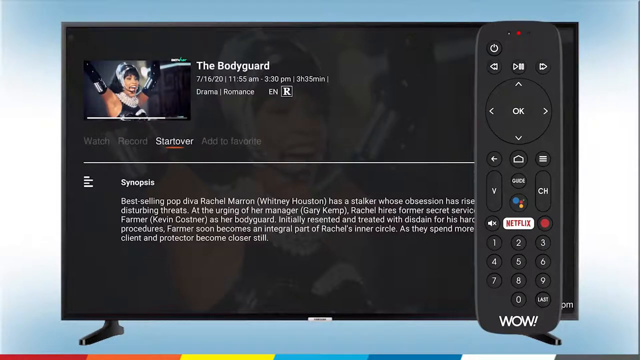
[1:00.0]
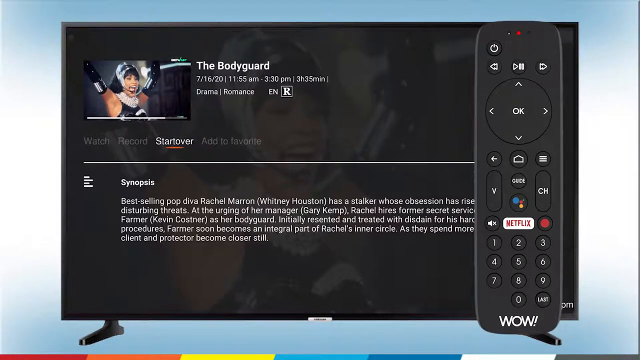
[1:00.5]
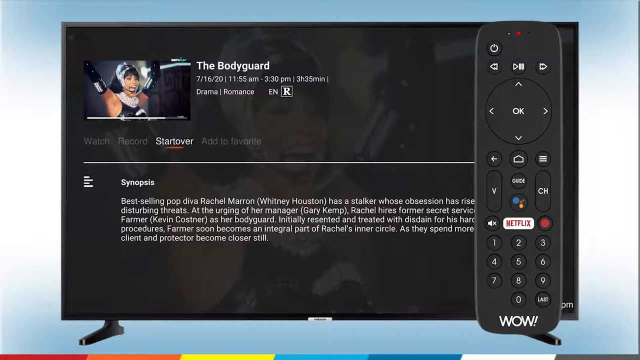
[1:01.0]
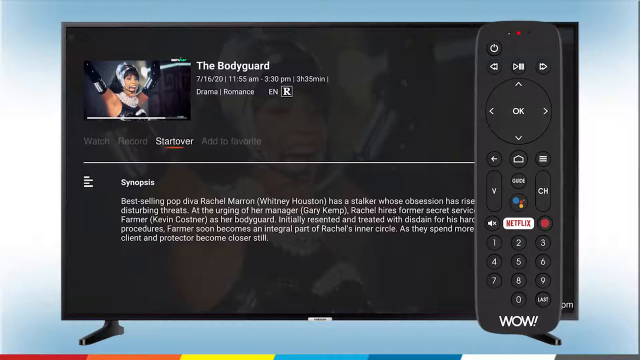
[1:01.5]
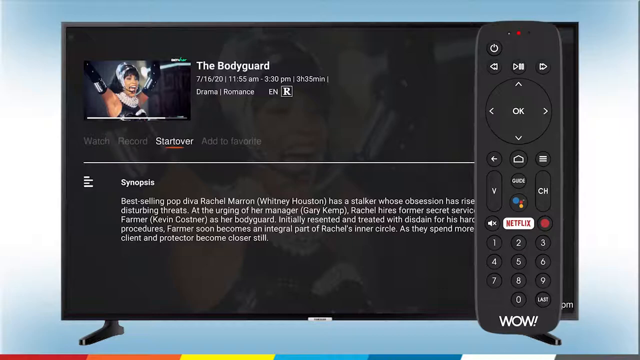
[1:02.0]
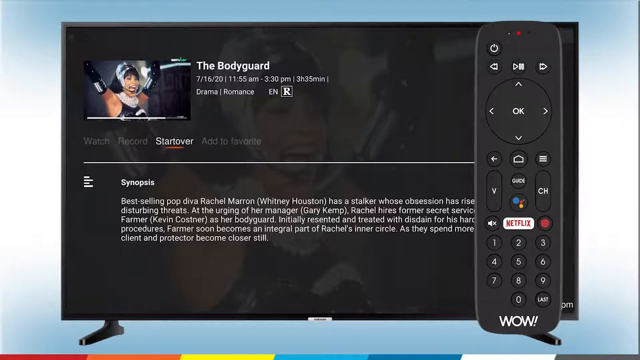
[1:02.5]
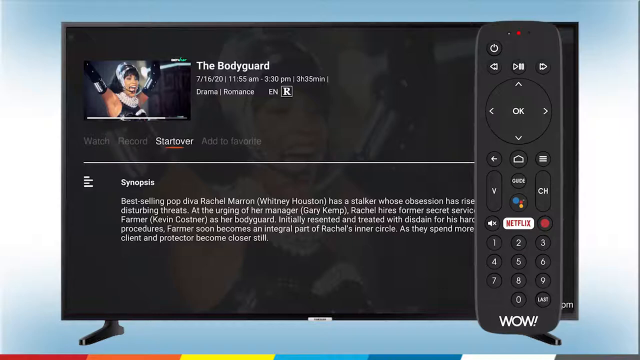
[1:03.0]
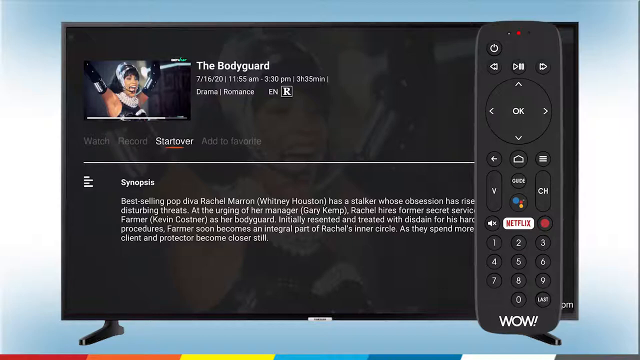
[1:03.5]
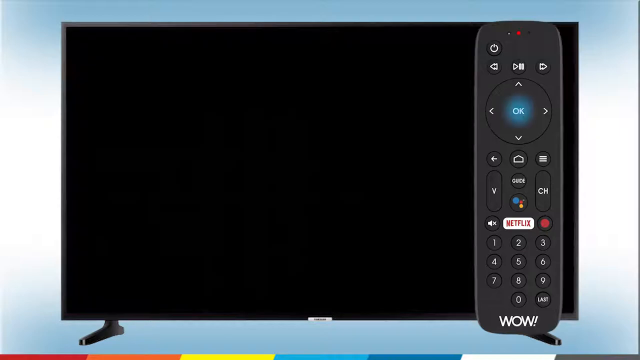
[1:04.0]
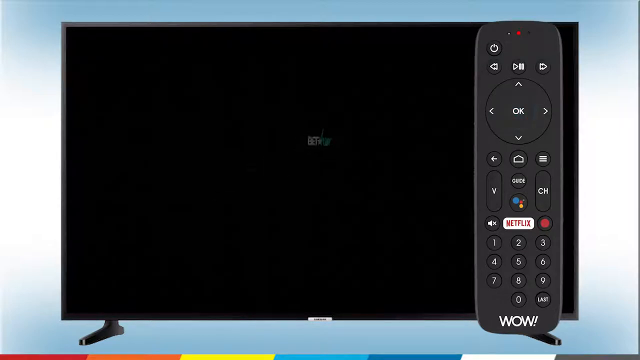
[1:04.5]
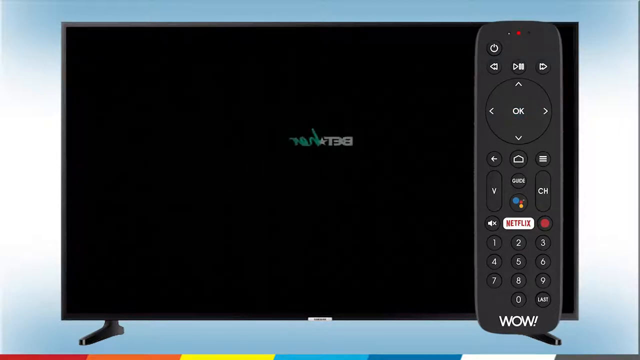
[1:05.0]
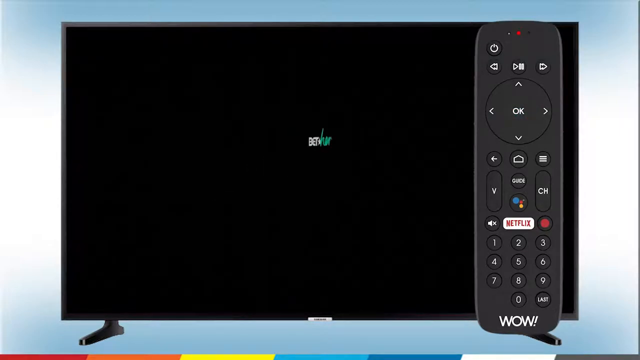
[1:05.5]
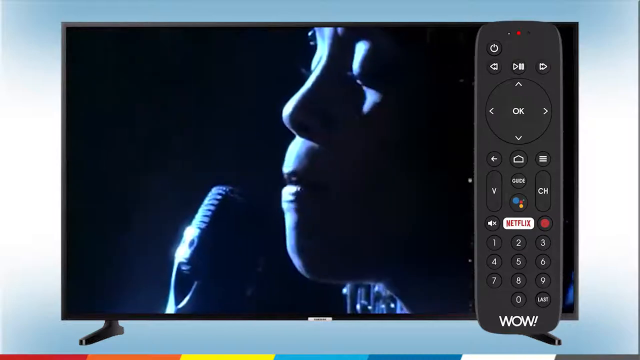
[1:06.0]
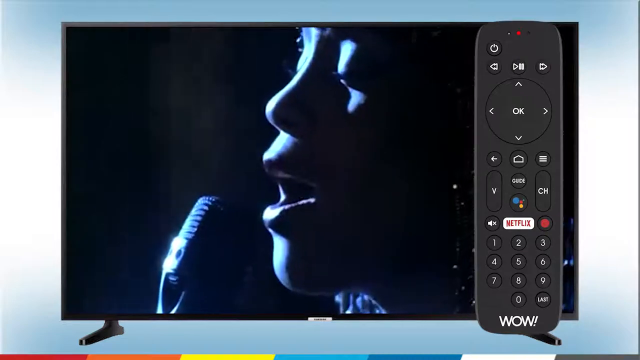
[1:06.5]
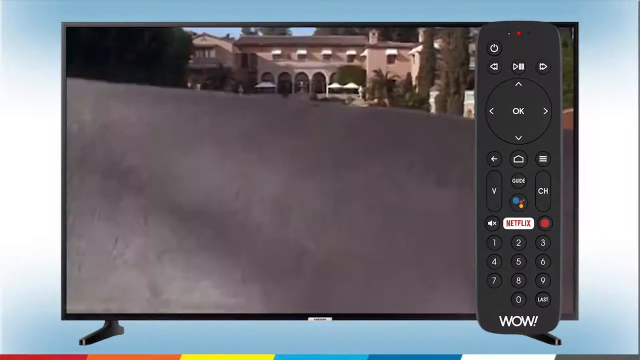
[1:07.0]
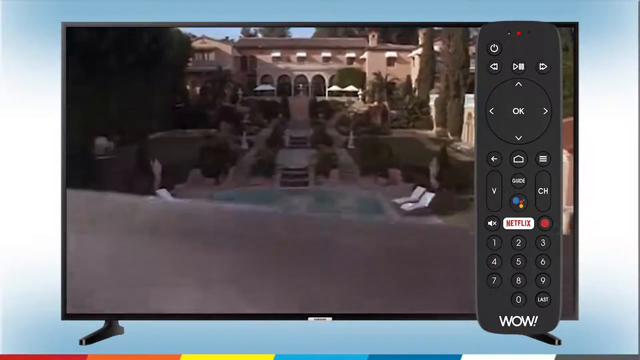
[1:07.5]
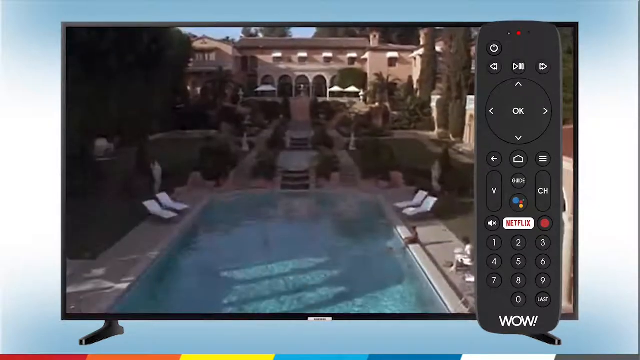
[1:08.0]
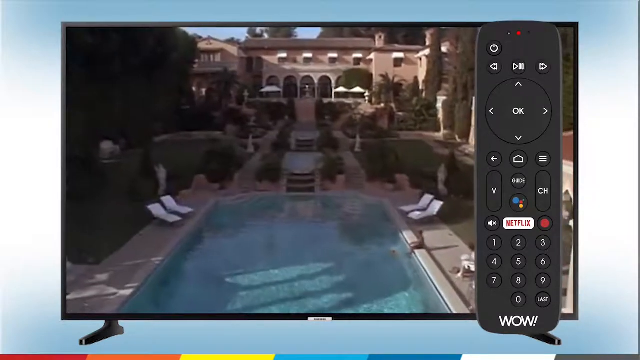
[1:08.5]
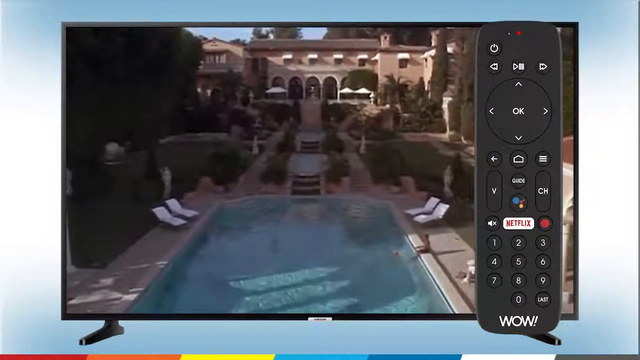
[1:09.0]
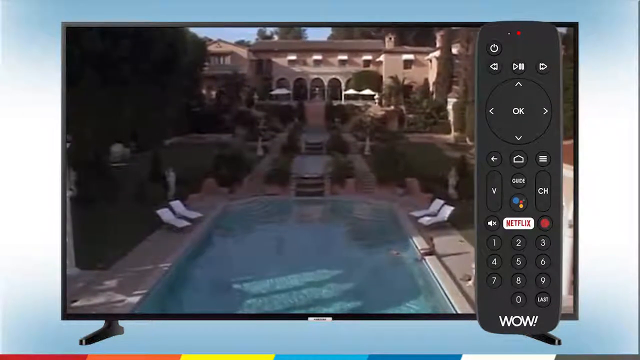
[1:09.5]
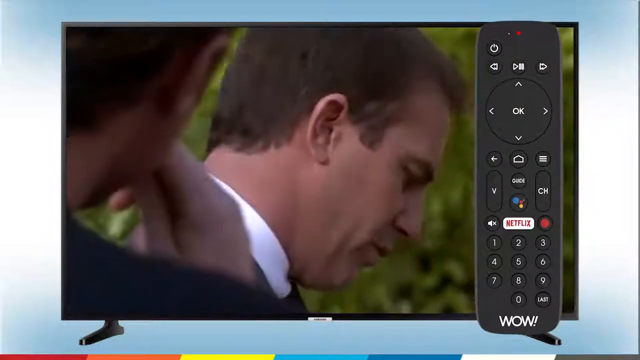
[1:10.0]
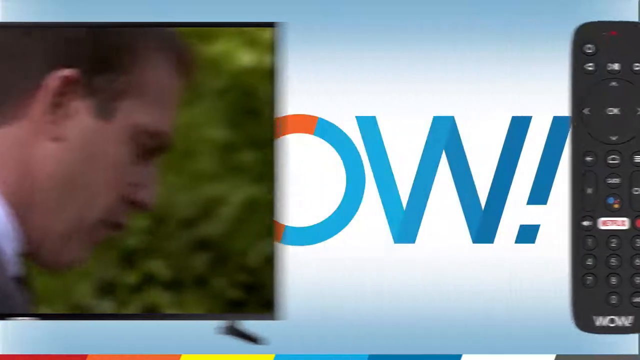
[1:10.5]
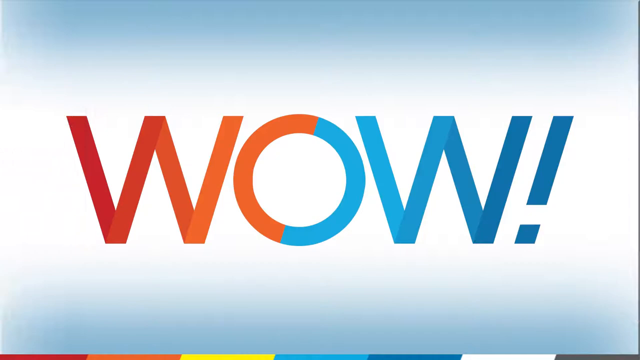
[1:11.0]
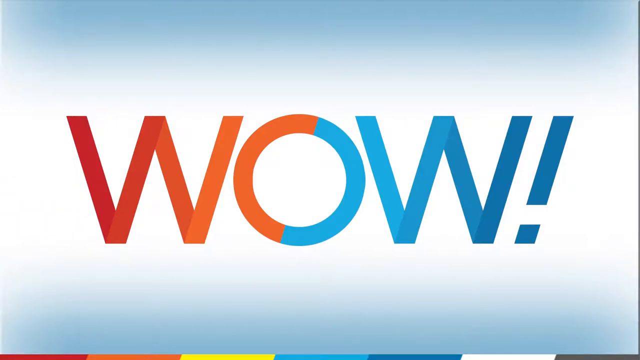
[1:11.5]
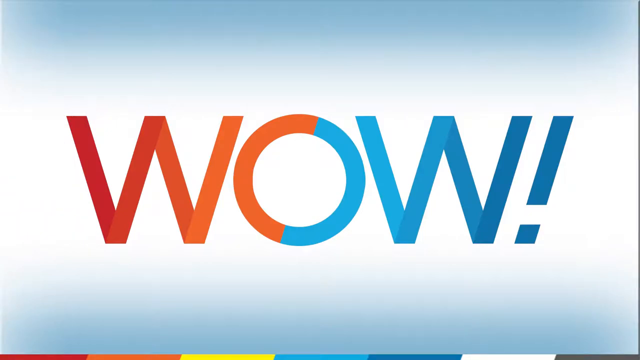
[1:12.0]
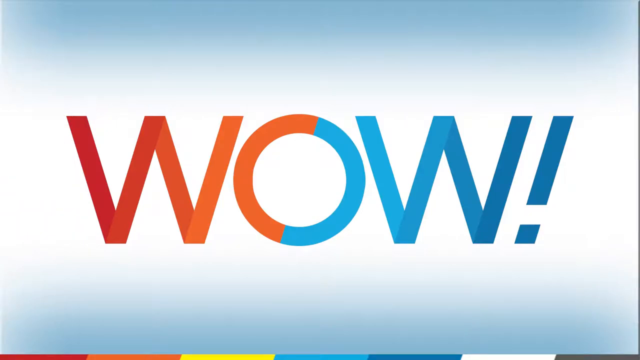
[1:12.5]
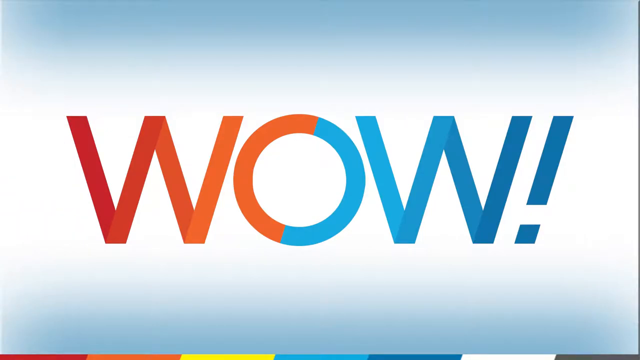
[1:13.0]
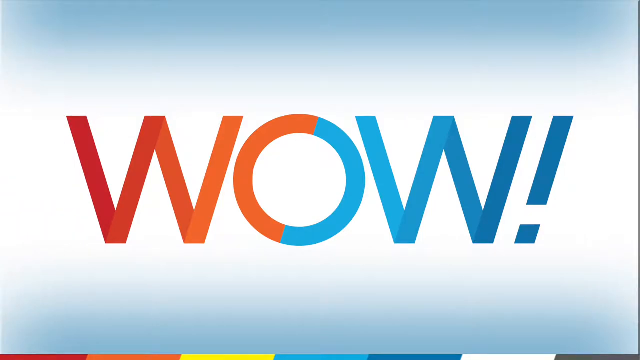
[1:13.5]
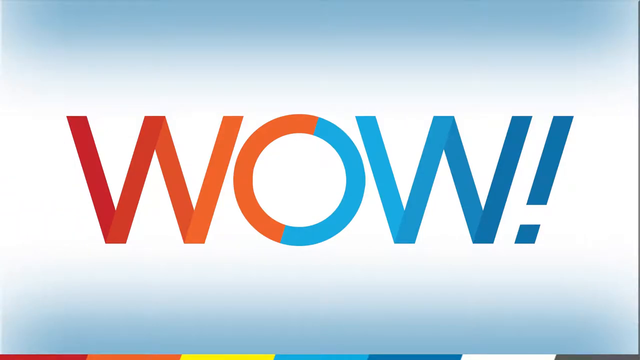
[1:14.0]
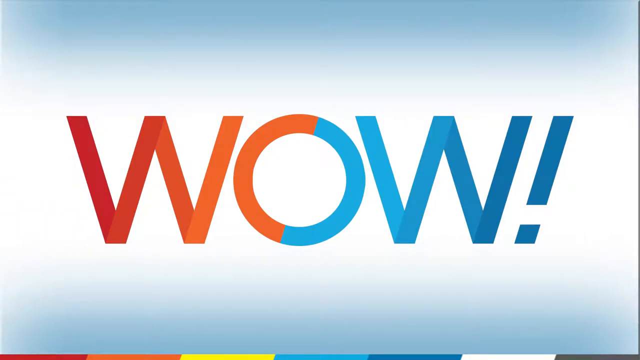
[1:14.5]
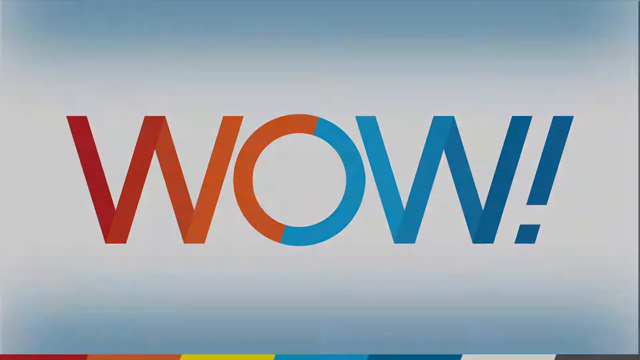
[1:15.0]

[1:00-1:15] The screen still shows the synopsis for the movie The Bodyguard and seems to stay there for a few seconds. On the remote on the right side, the OK button is highlighted and appears to be clicked, as BET Her begins to open. Then the movie The Bodyguard opens, or at least what looks like a trailer for the film, which is shown for a few seconds. The television screen then moves away to the left side and the remote moves away to the right side, and the word "WOW!" pops up. This closing screen is shown until the end of the video.